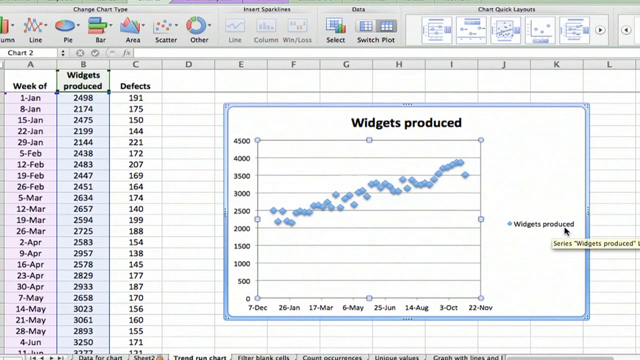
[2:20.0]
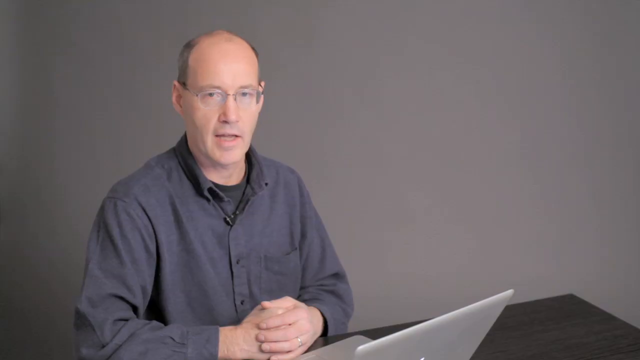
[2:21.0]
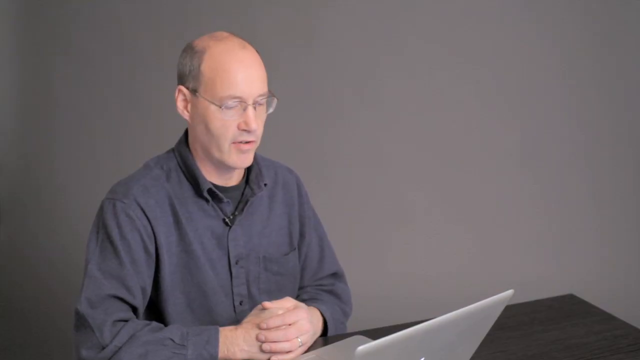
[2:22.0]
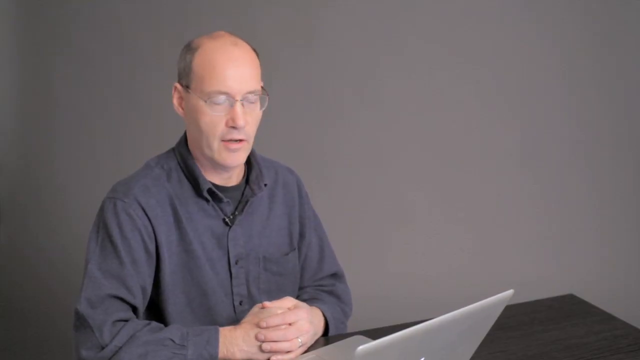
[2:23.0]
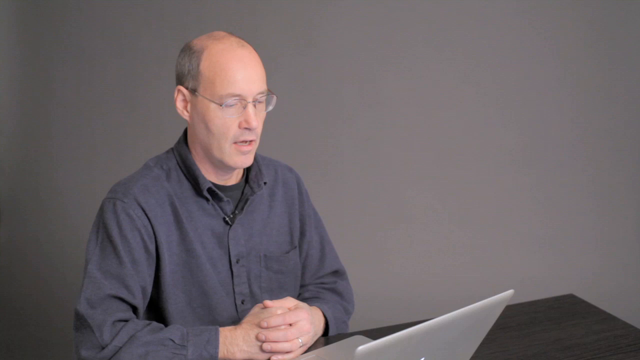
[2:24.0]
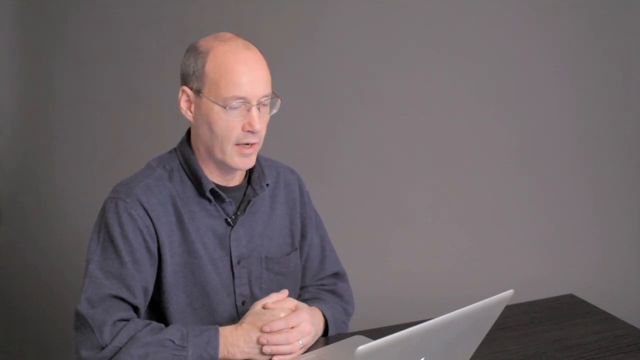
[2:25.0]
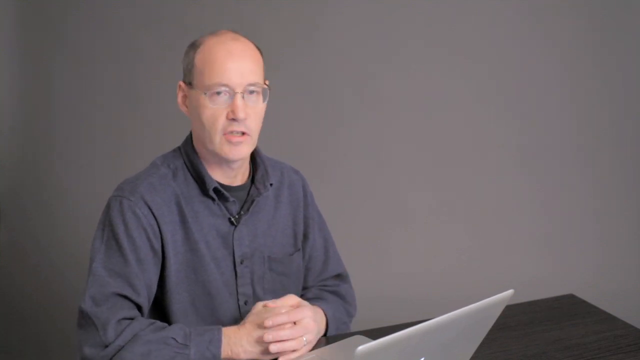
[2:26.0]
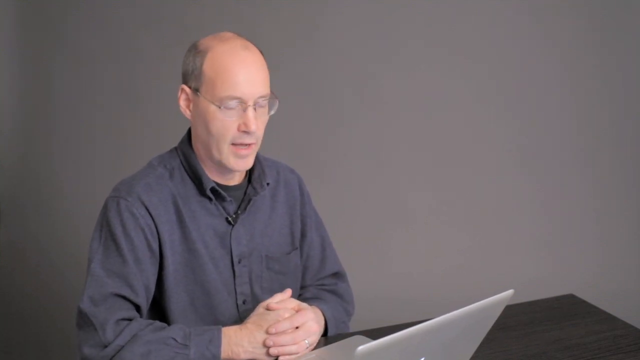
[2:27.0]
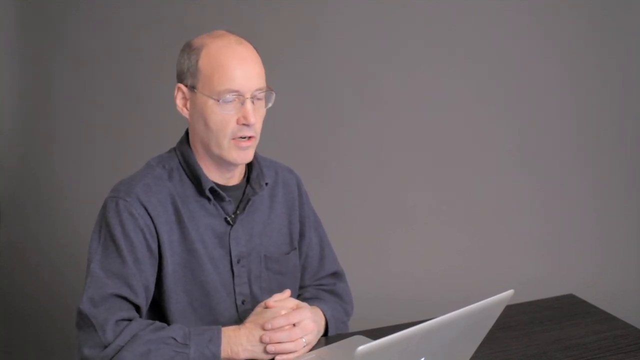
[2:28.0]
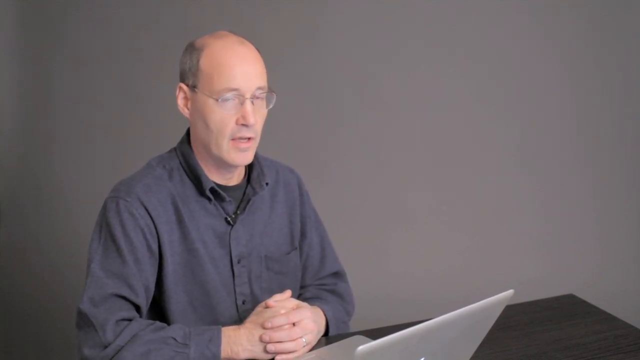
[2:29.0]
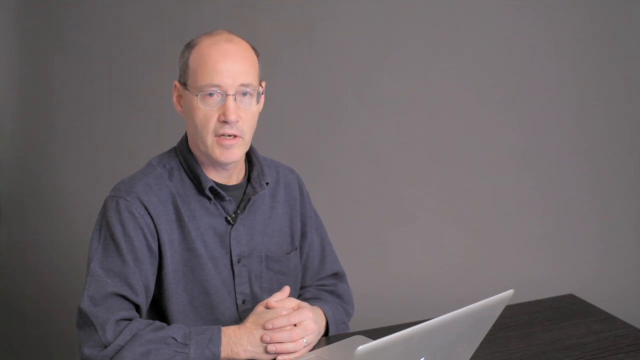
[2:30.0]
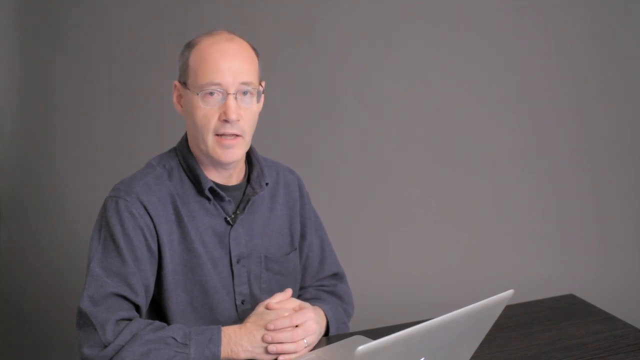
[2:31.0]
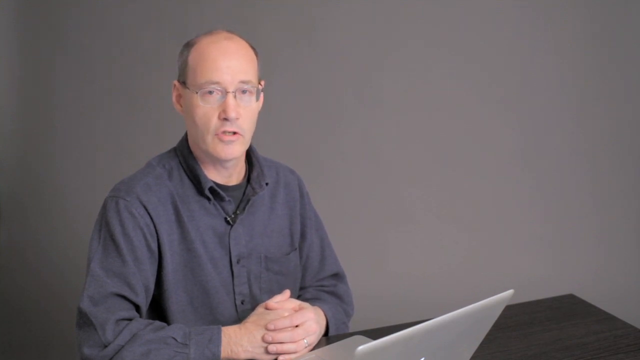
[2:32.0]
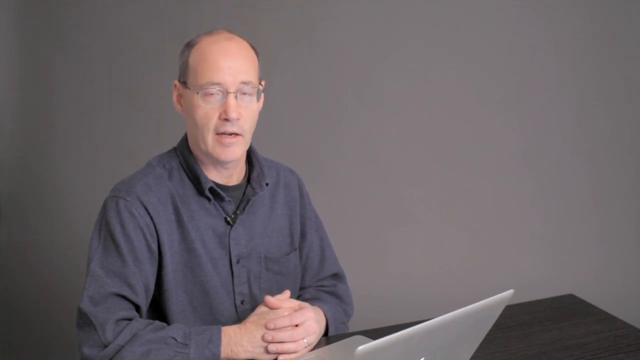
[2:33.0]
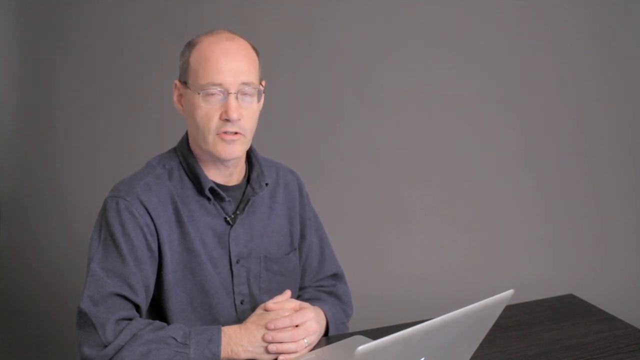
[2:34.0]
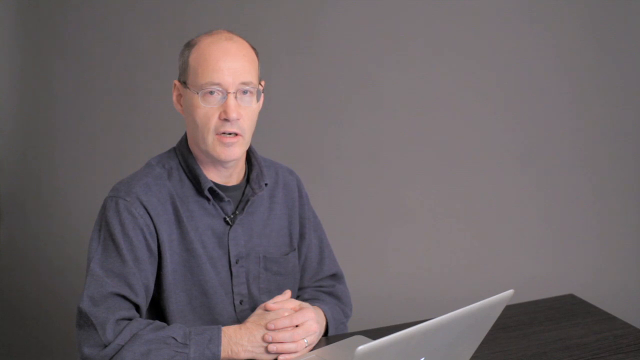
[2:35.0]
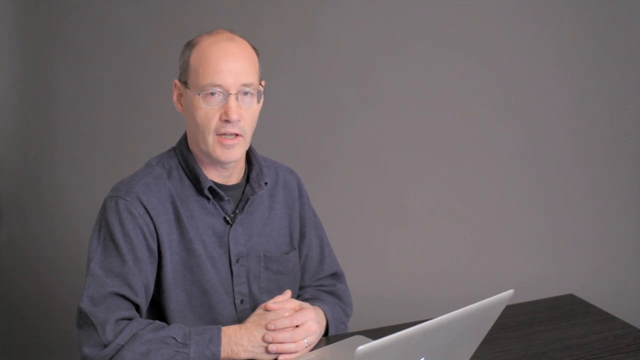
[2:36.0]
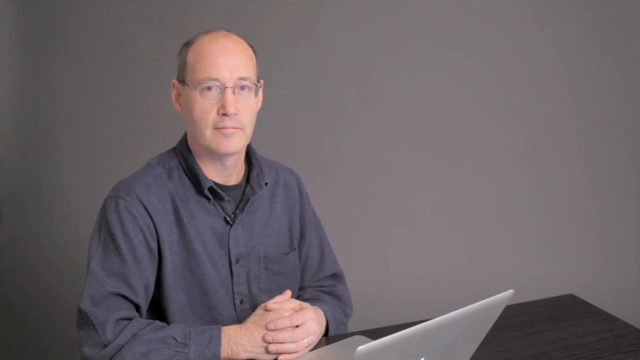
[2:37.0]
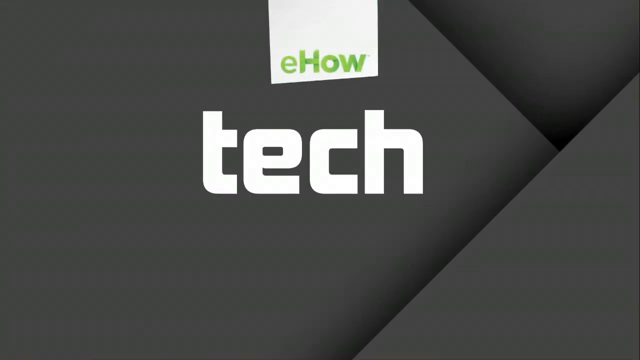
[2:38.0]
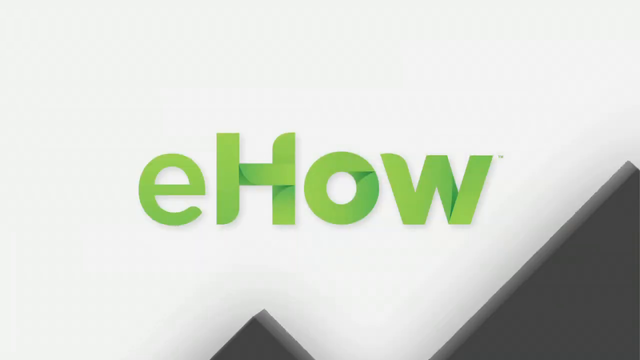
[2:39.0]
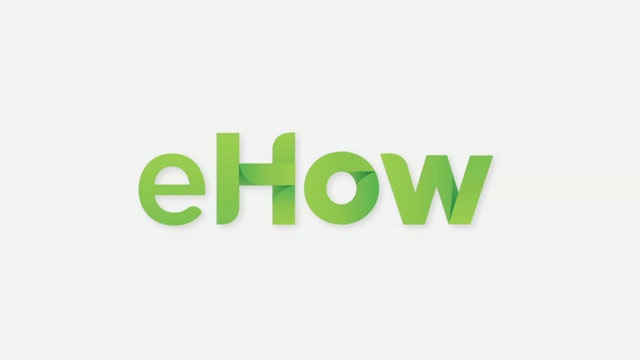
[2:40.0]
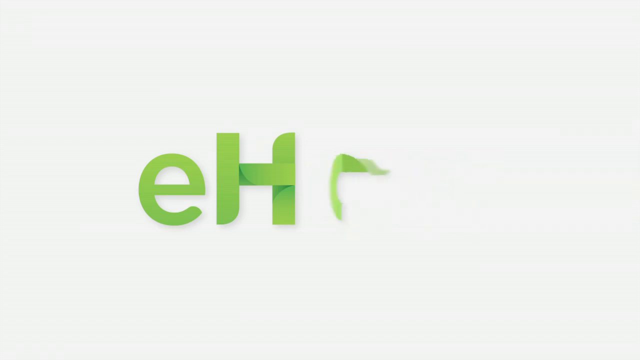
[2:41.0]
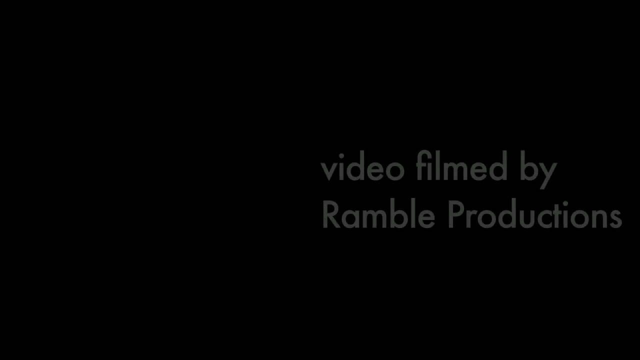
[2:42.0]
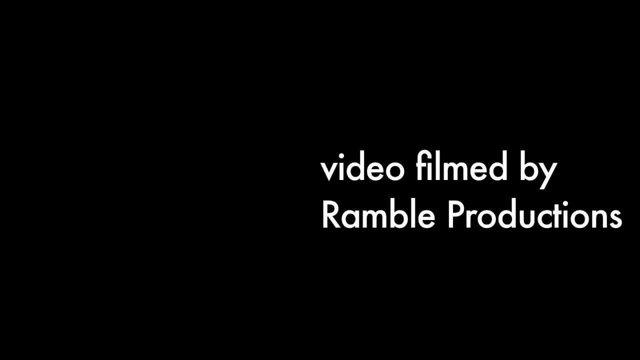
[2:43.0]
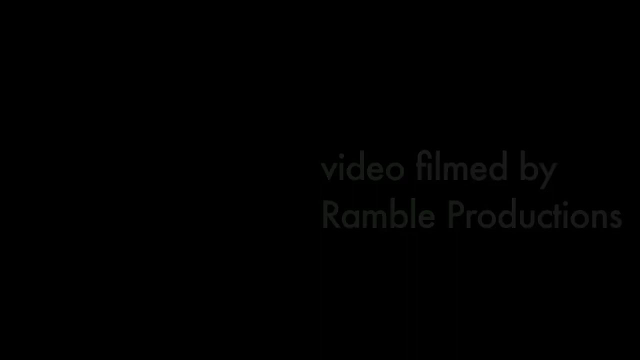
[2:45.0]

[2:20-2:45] An Excel document with three columns of data, week of, widgets produced and defects, contains a marked scatter chart plotting the widgets produced against the week they were produced. The video then cuts to Ted Russell, the mechanical engineer at eHow Tech. He holds his hands in front of him on the edge of a table, with a laptop in front of his hands, and shifts his attention between the camera and the laptop. He wears a dark gray long-sleeve button-up shirt, glasses and a ring on his third finger, and has a receding hairline. His left hand is over his right. He seems to be describing what is on his laptop. He looks at the viewer for a long period as he speaks and finishes speaking while looking at the viewer. Three sections of dark gray or black background then fold into view, with a white tab in the top center showing ehow in green lettering and the word "tech" formed in white letters below. The screen switches to the cream-colored background with ehow in green letters, and the letters dissipate from the end to the beginning. The video then shifts to a black screen with a credit on the mid right reading "Video filmed by" and, on the next line, "Ramboll Productions".